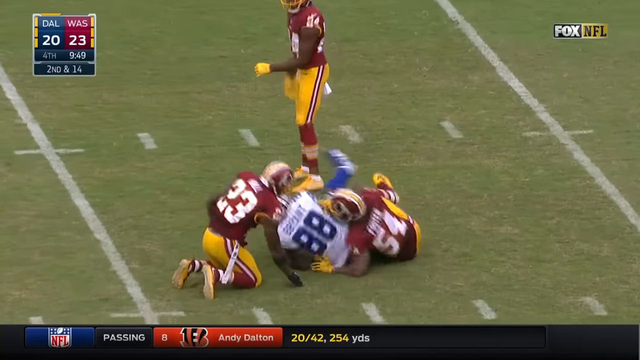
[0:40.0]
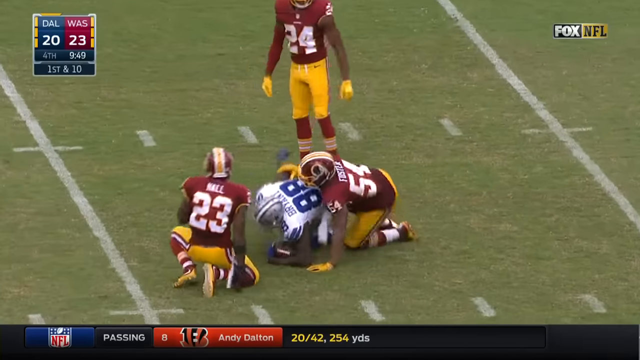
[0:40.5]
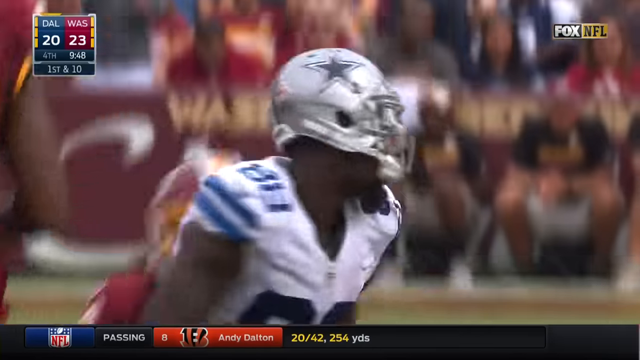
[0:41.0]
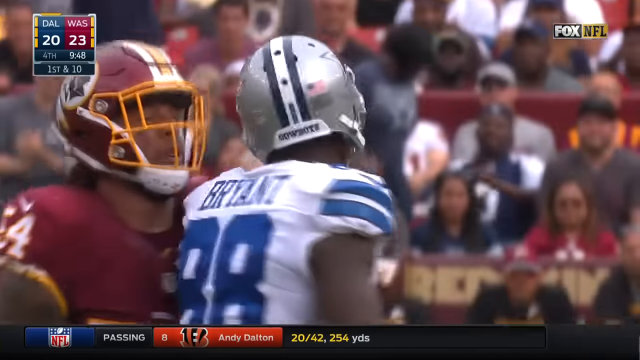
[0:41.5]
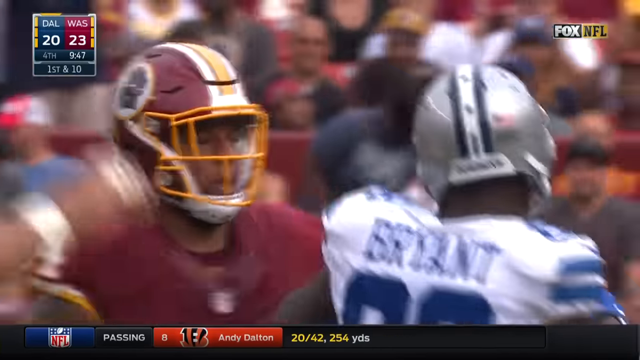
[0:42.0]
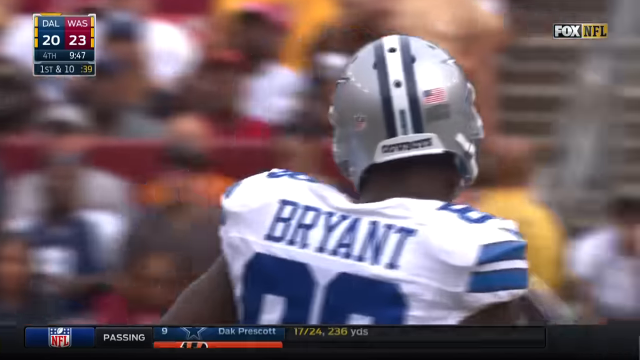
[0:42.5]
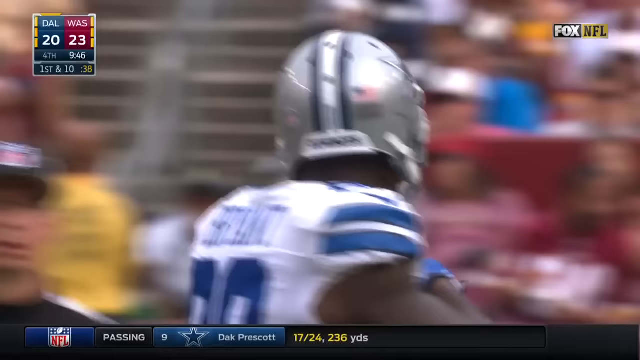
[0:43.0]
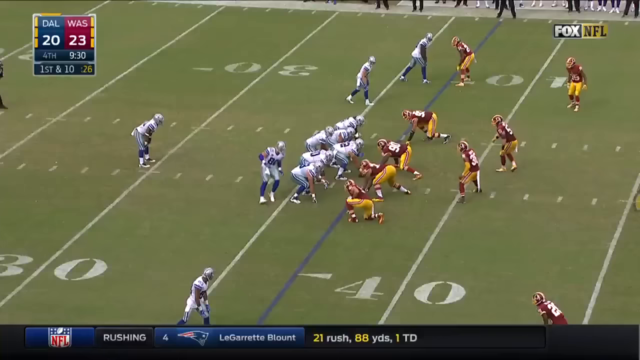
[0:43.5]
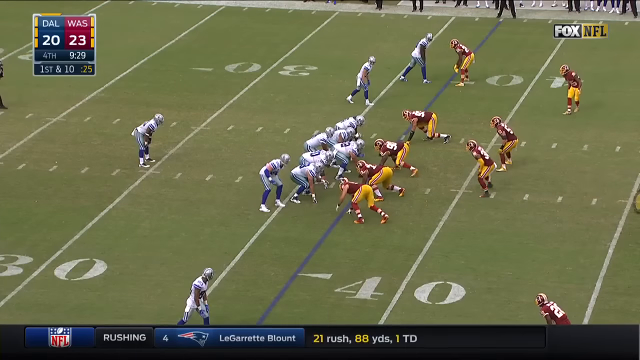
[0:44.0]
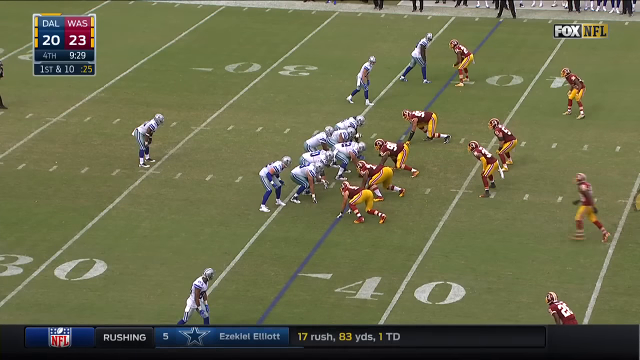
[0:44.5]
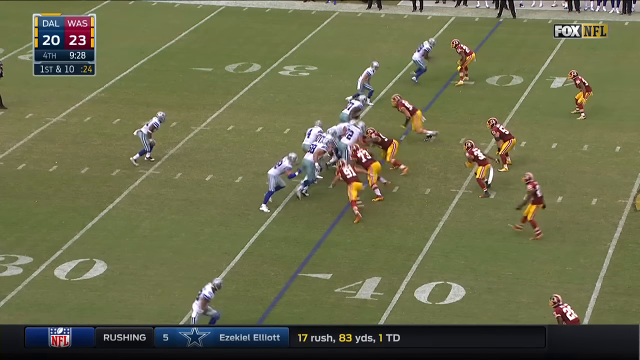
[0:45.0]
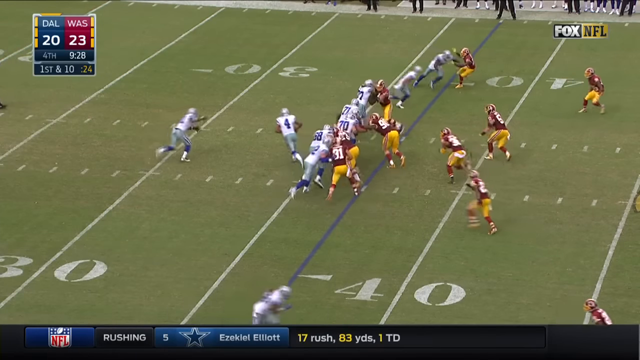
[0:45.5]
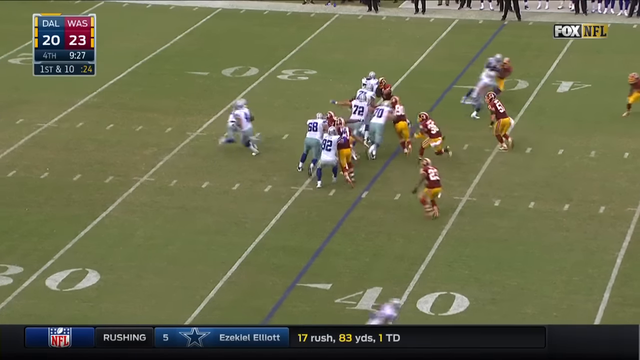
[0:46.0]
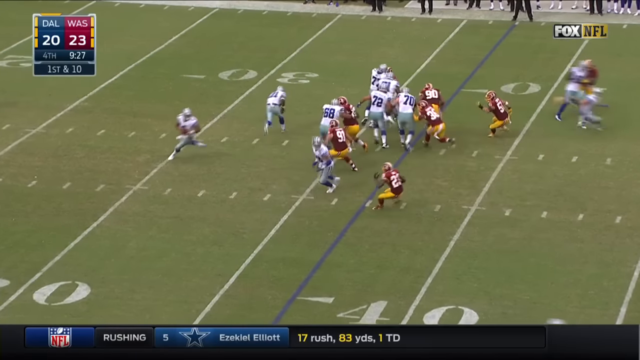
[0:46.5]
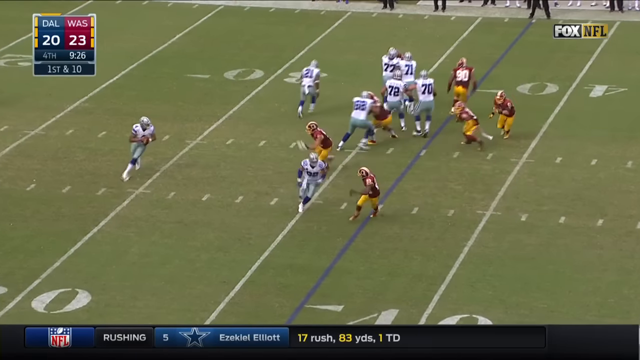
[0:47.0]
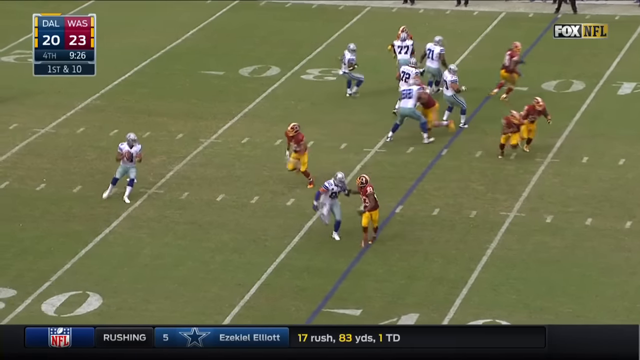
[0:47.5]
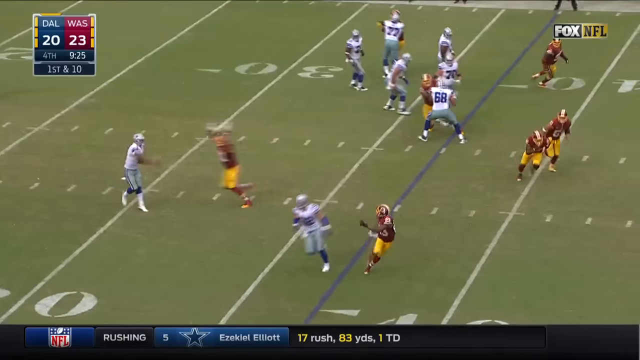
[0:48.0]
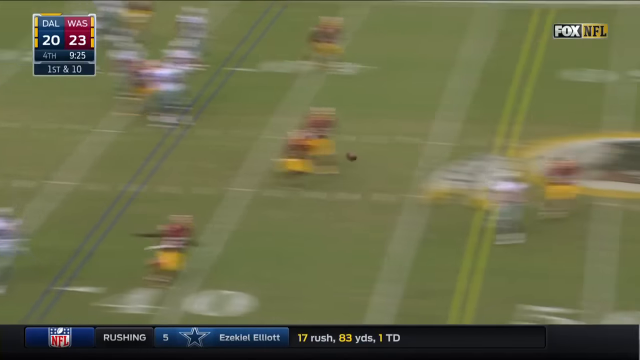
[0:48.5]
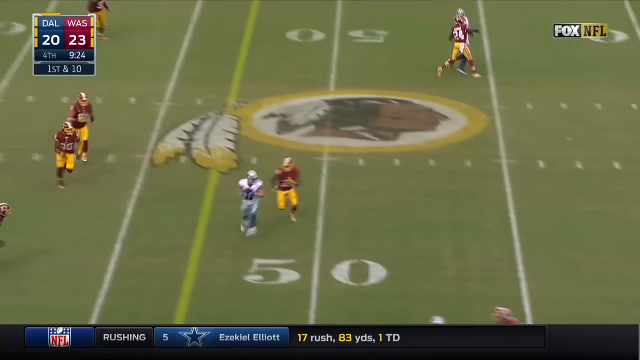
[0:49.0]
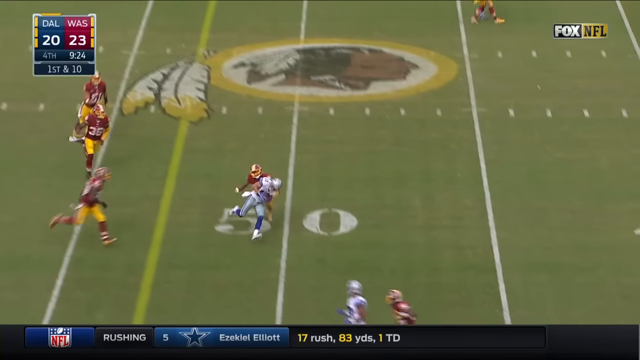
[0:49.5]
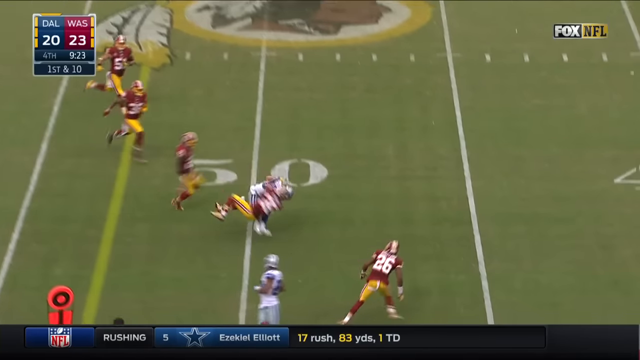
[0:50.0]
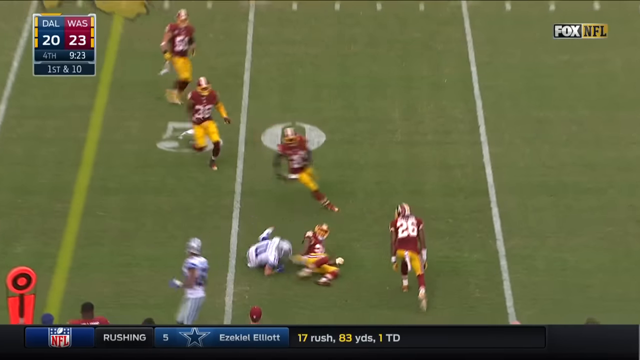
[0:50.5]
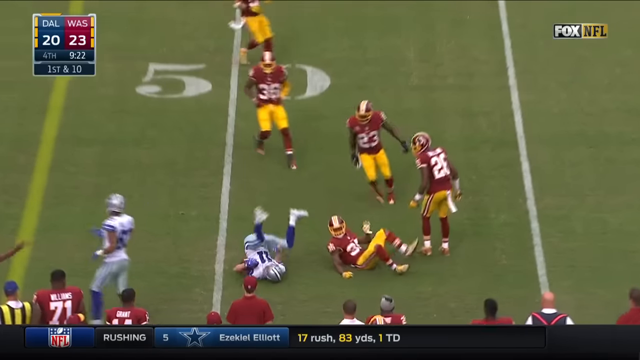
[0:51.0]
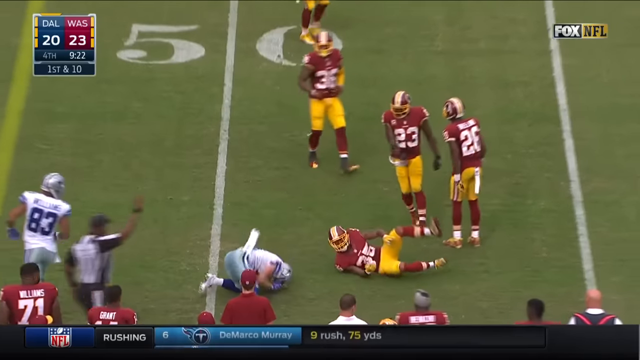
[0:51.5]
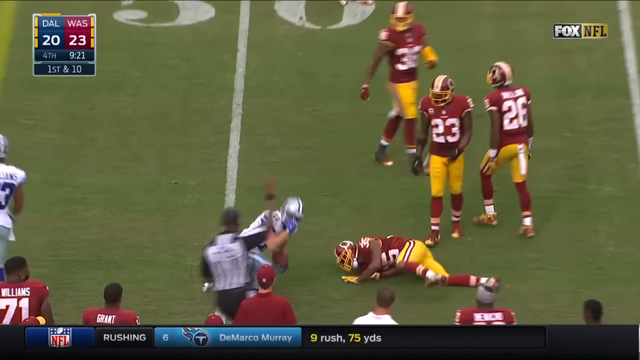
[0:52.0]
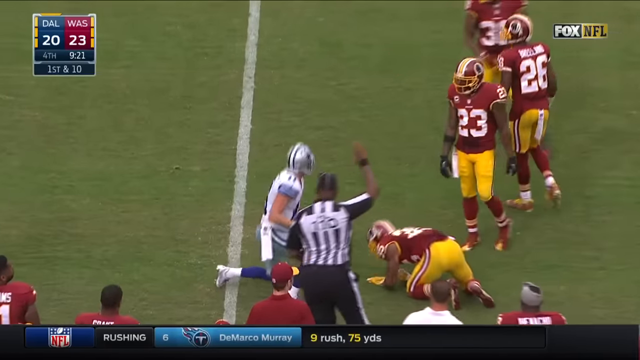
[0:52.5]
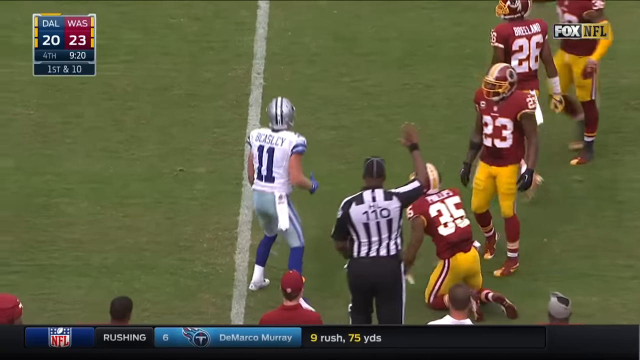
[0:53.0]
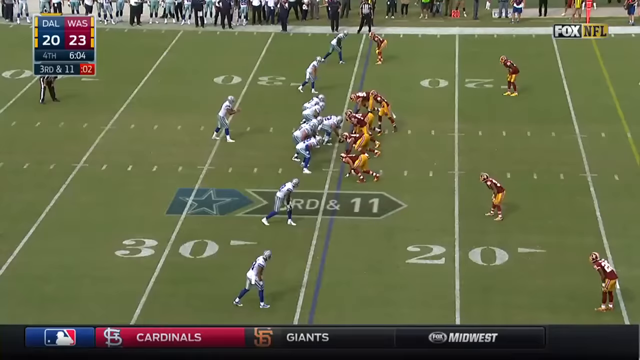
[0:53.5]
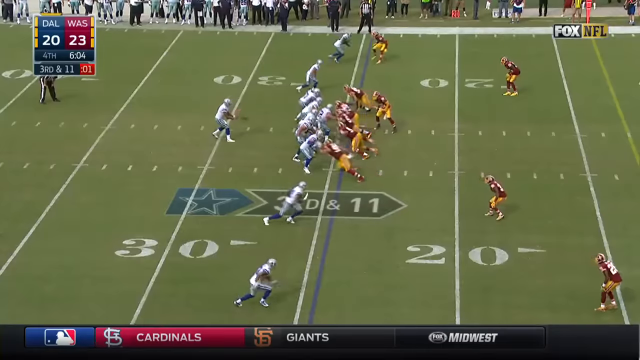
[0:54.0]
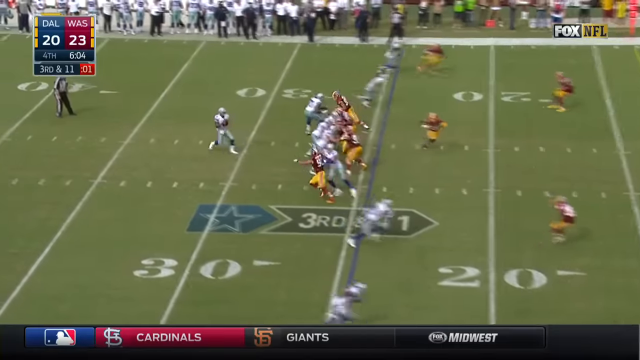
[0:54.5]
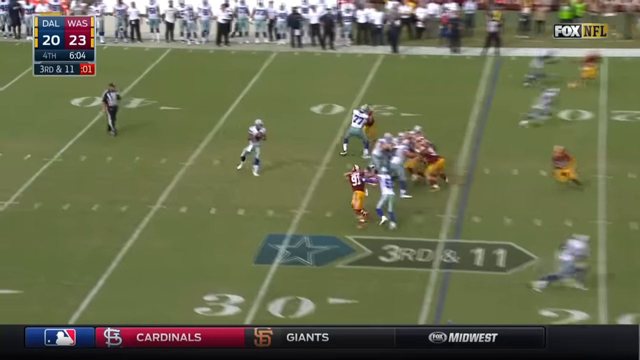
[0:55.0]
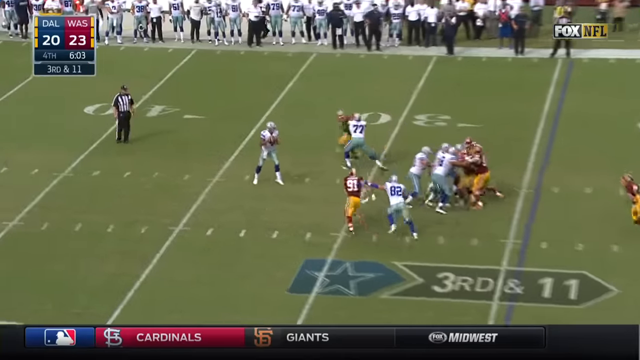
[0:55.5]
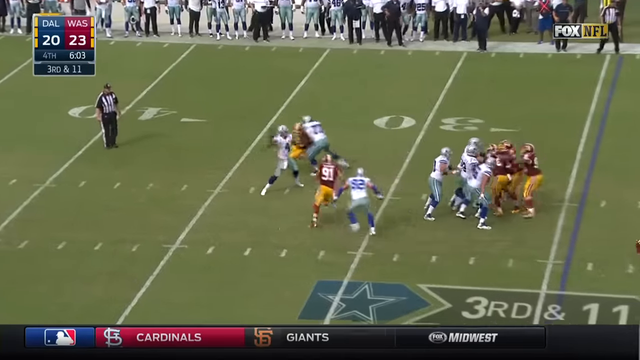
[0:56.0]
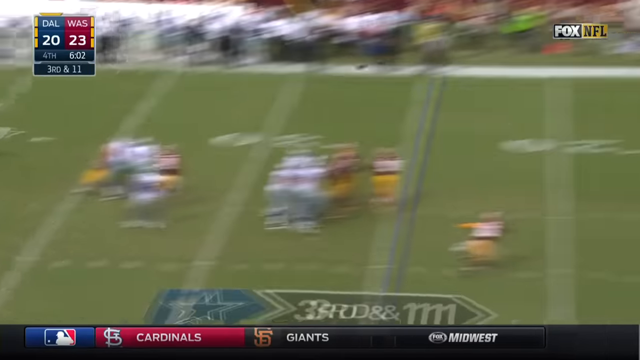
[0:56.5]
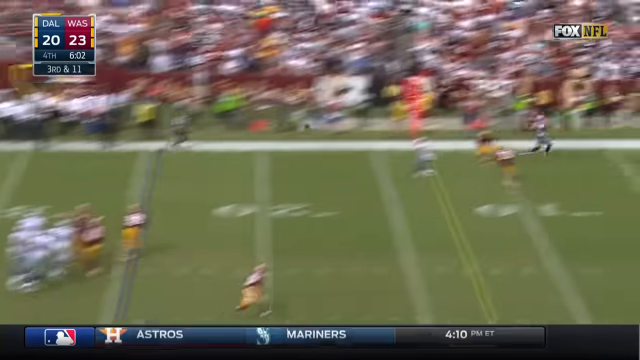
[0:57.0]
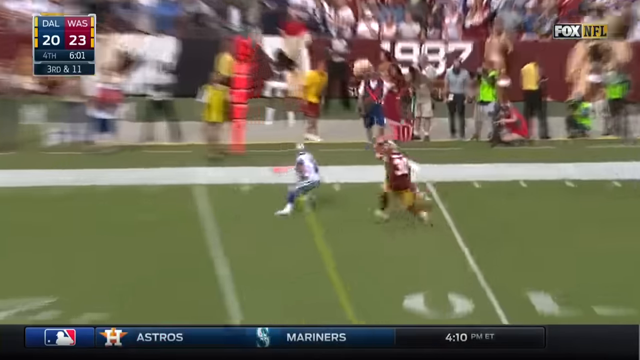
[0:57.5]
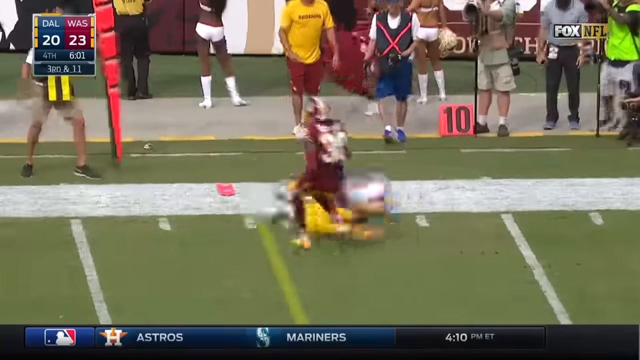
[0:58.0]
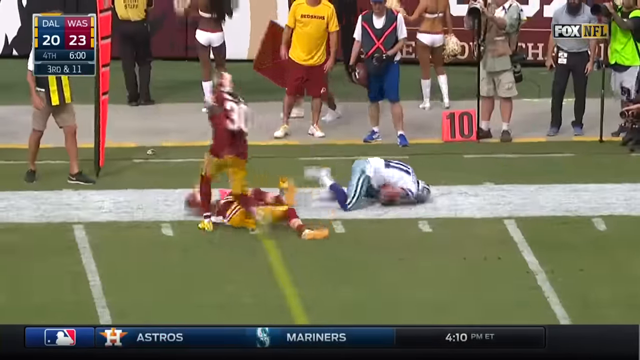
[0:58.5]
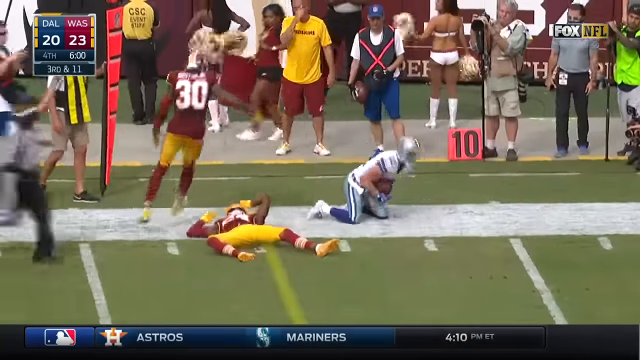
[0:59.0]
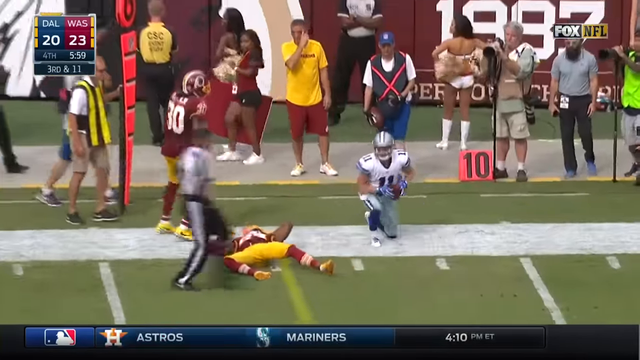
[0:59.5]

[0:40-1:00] The Redskins players wear red jerseys with gold pants, and the Dallas players wear white with blue lettering. A Dallas player who was apparently just tackled gets up off the ground and walks away. Then what is possibly a replay or a new play is shown: the Dallas quarterback is at about the 30-yard line, with the play taking place around the 37-yard line. The quarterback fakes a handoff, the ball is snapped, and a pass is successfully caught at about the 47-yard line. The receiver is tackled at about the 50-yard line, rolling like a somersault as he is taken down, and the other player jumps up at the same moment this player gets up off the ground, so it is possibly an instant replay. As the tackler and the receiver fall to the ground, they skid toward the bottom right corner of the video, almost off the field, their butts right against the edge of the stadium grass.